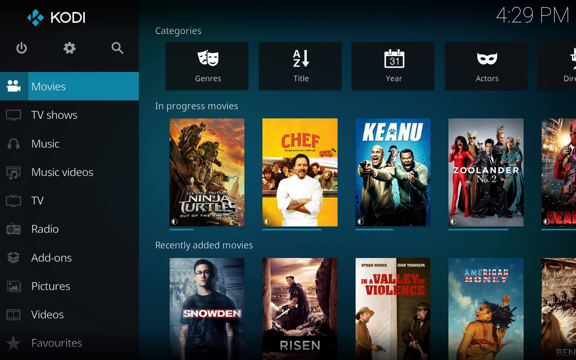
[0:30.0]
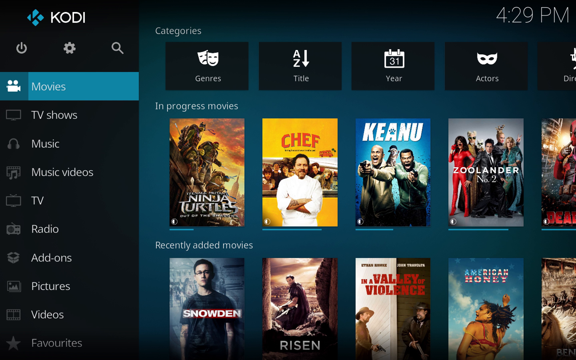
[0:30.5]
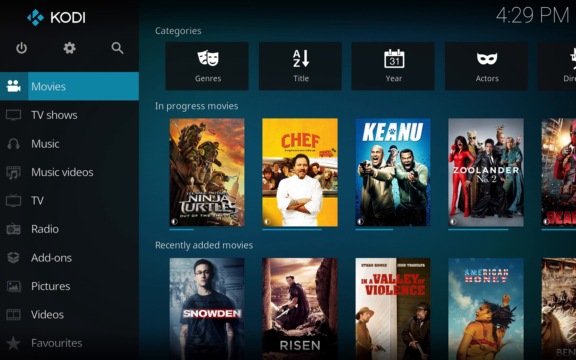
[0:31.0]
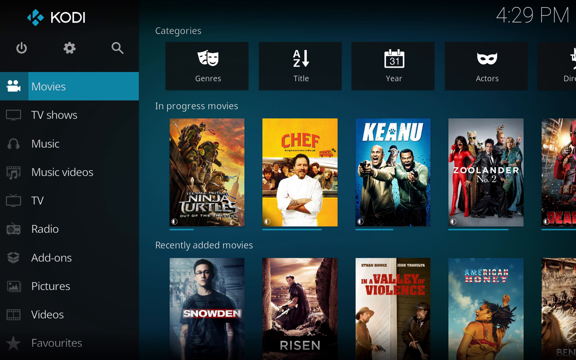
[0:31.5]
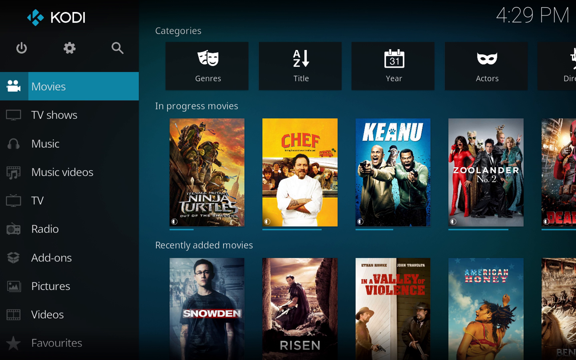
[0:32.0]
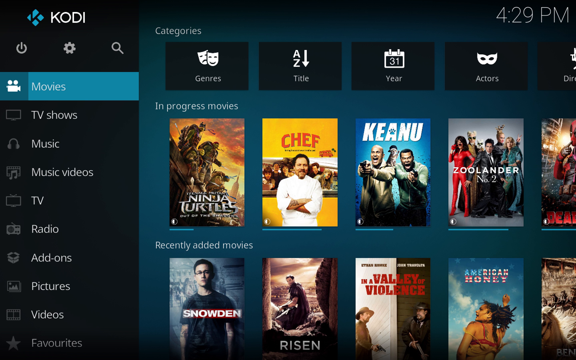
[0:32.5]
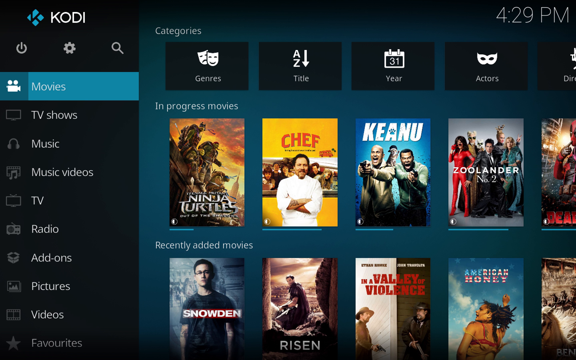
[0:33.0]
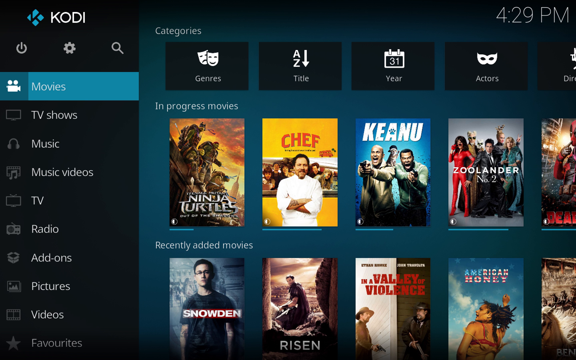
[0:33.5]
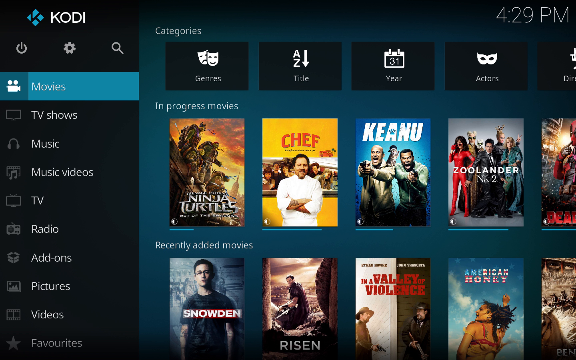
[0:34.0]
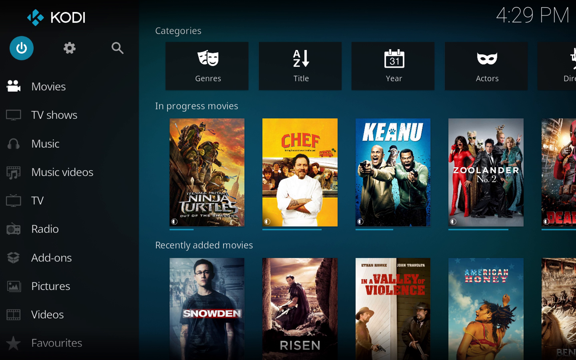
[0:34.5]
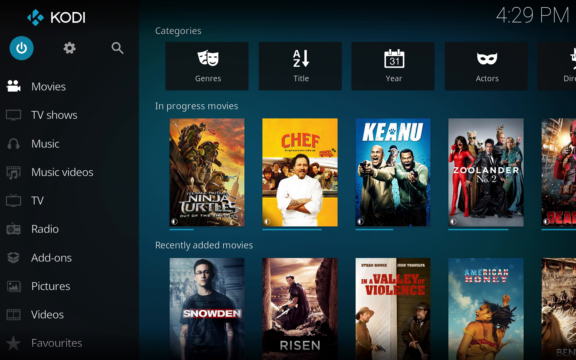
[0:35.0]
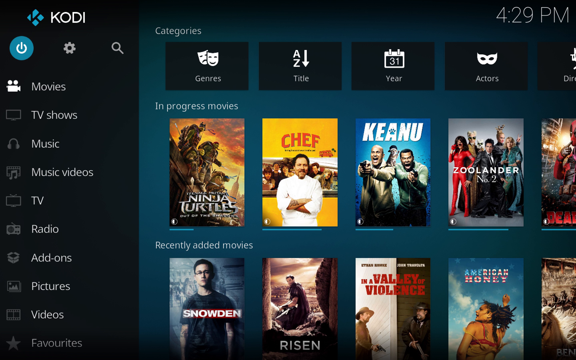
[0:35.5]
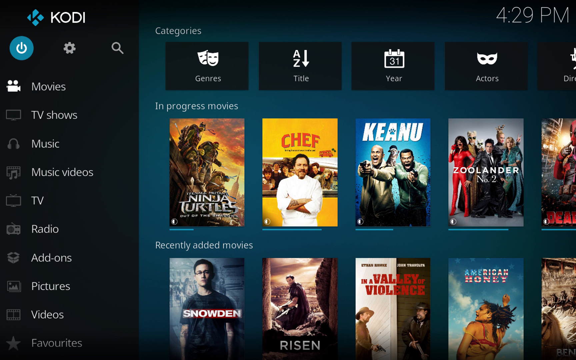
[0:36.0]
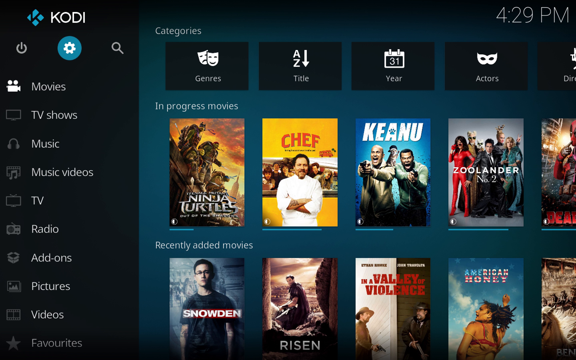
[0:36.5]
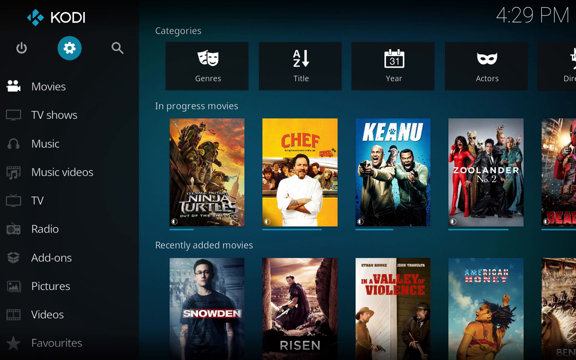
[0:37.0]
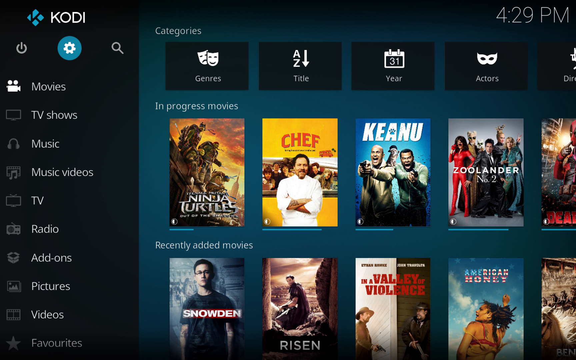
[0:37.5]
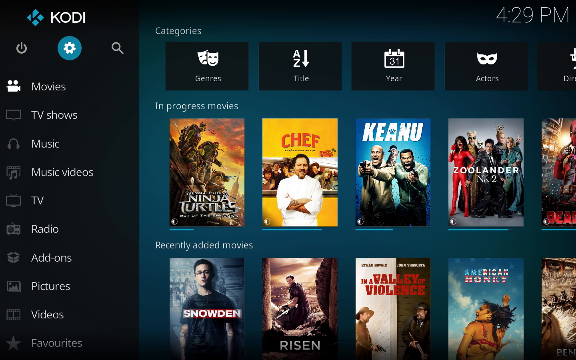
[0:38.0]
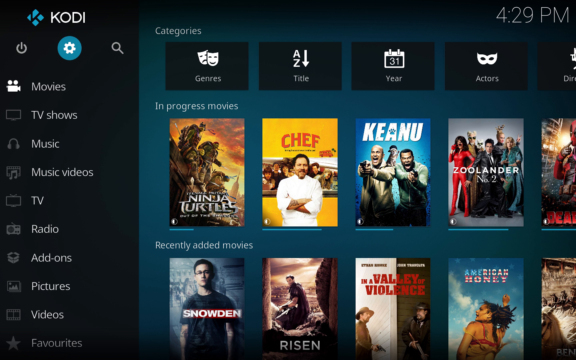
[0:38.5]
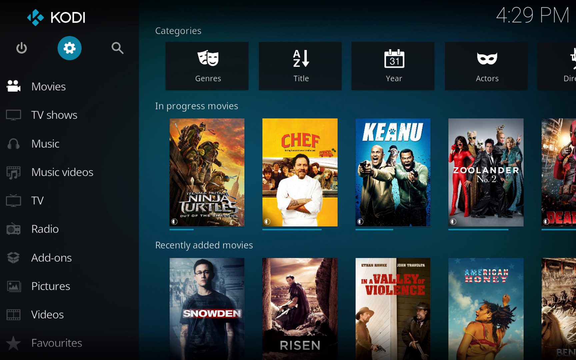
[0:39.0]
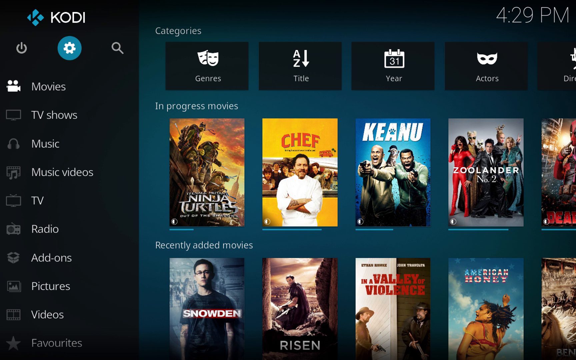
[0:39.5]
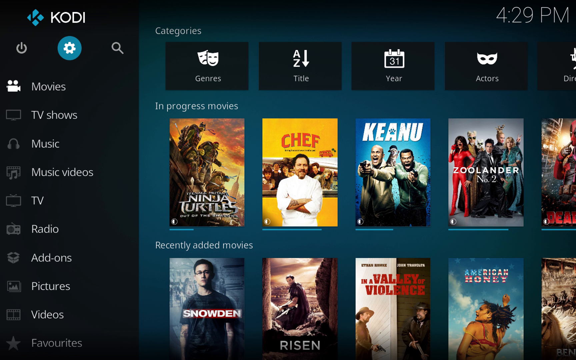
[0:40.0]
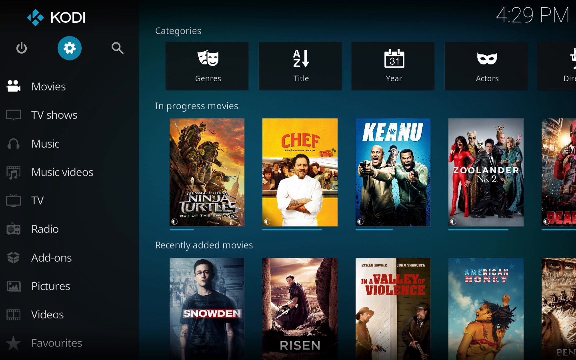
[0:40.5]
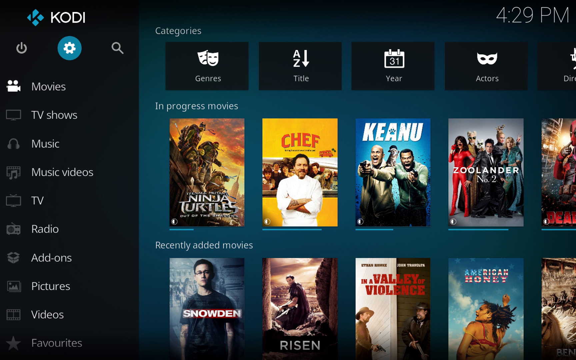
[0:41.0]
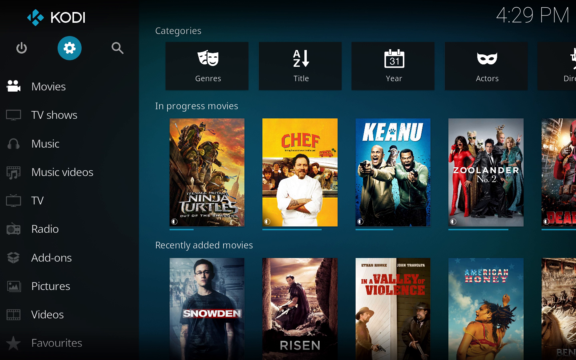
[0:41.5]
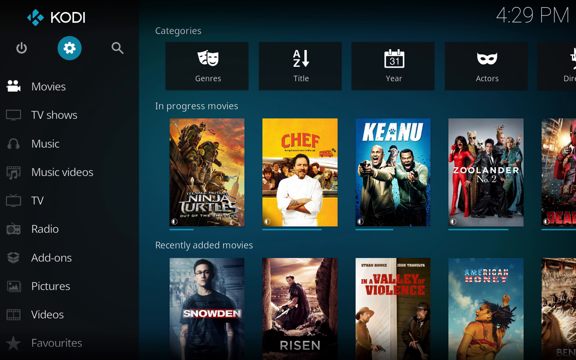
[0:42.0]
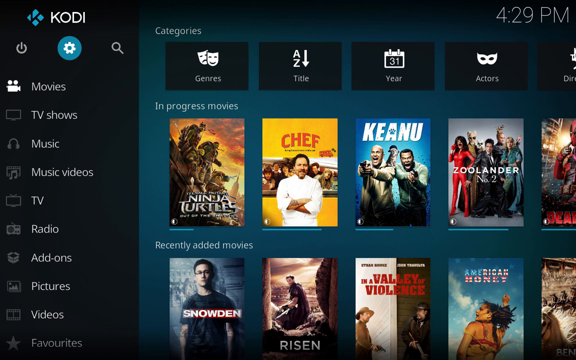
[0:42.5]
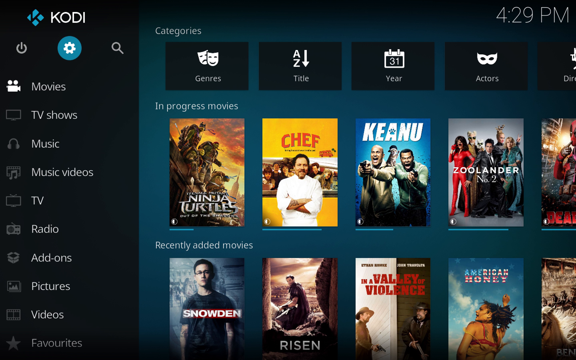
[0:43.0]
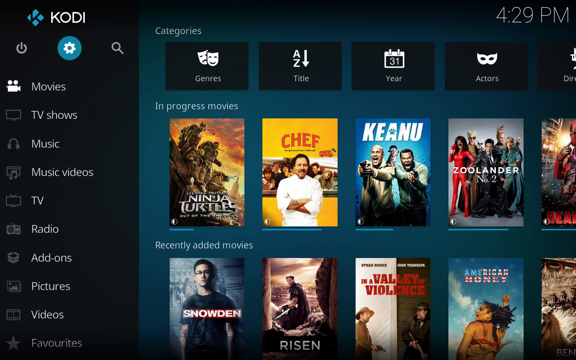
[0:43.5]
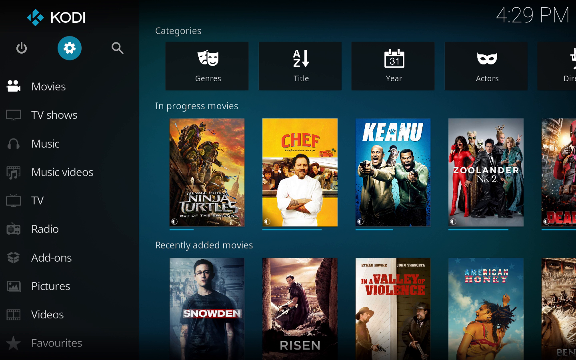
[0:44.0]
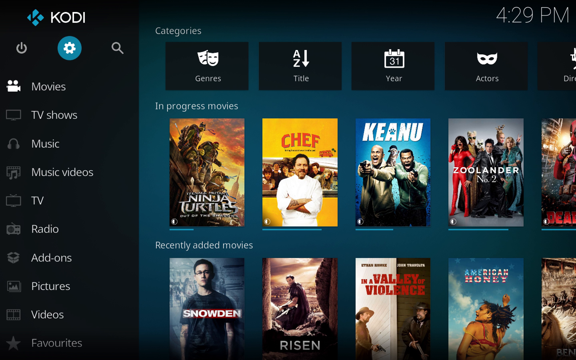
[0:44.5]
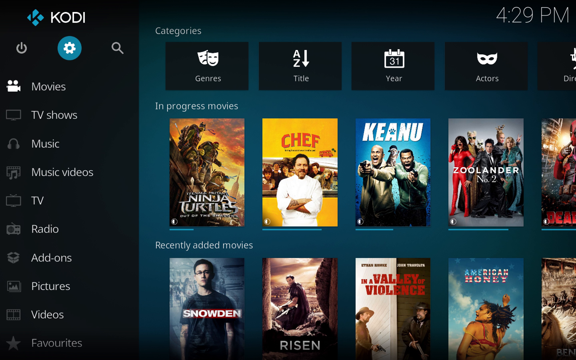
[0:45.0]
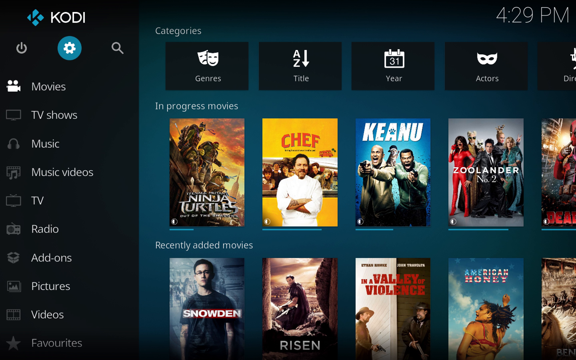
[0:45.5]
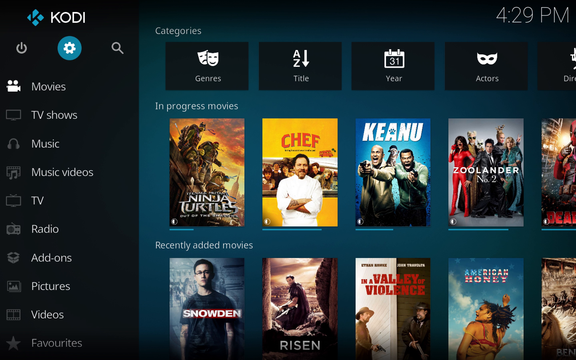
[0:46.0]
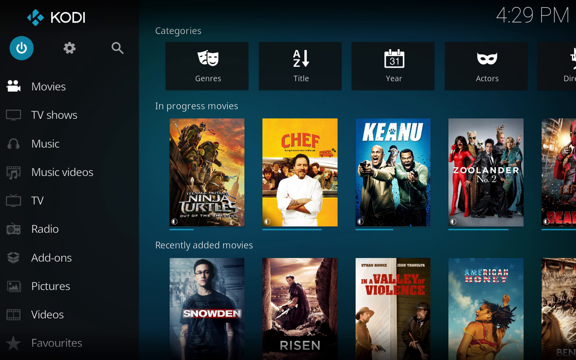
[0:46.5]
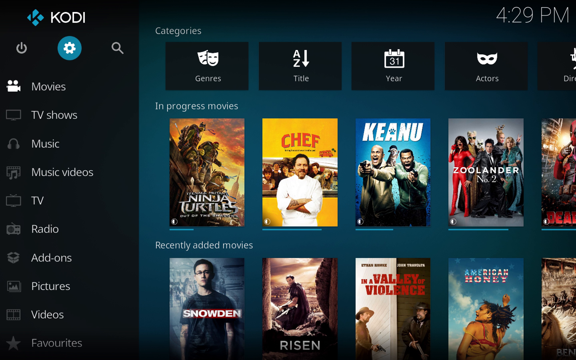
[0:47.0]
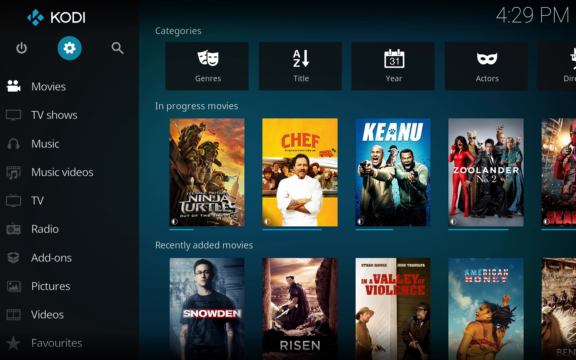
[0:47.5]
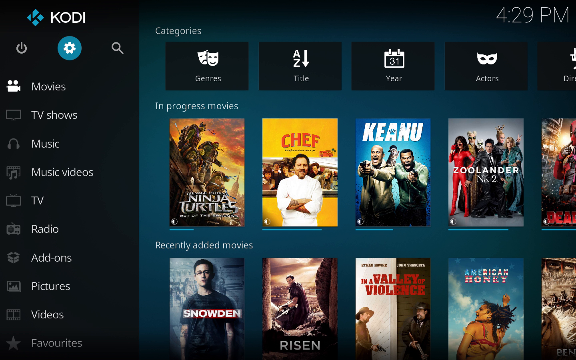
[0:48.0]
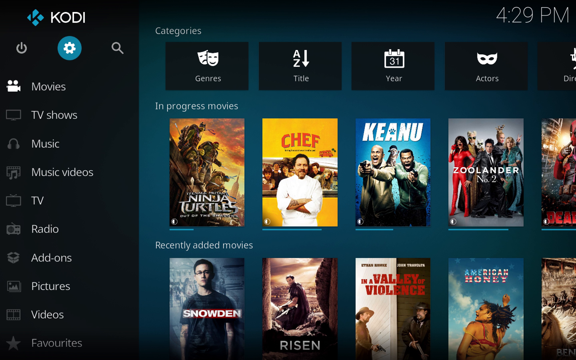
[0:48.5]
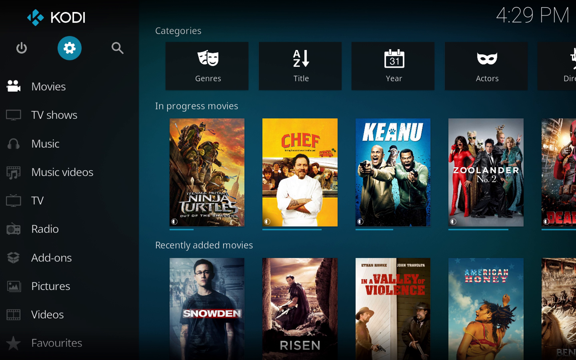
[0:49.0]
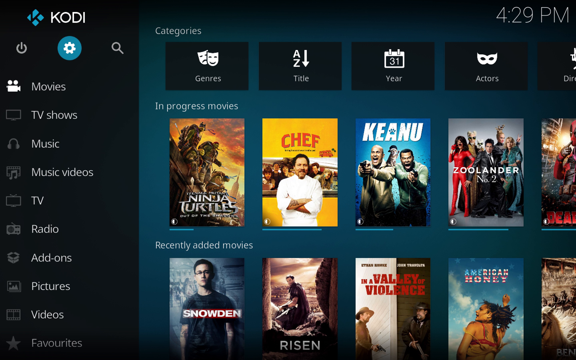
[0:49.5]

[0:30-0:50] A window screen of the Kodi app is shown, with a black and peacock green background. The screen is divided into two panels, the left narrower than the right. The left panel has a logo followed by the Kodi app name, below which are a power icon, a settings icon and a search icon, and below those, categories such as movies, TV shows, music, TV and radio. The right panel contains categories, in-progress movies, recently added movies and so on. At first, the peacock green highlight is over movies on the left side; then the mouse points to the power icon, indicated by a peacock green highlight. The highlight switches to settings, back to the power icon, and then to the settings icon again.